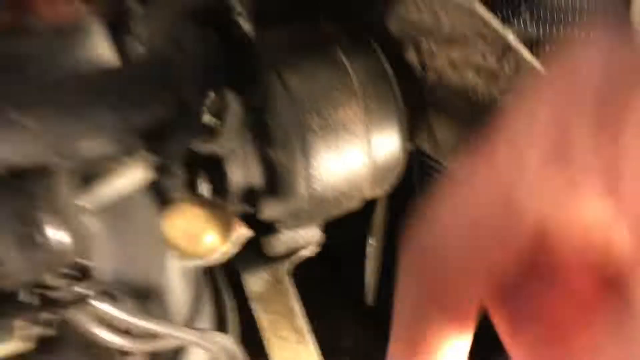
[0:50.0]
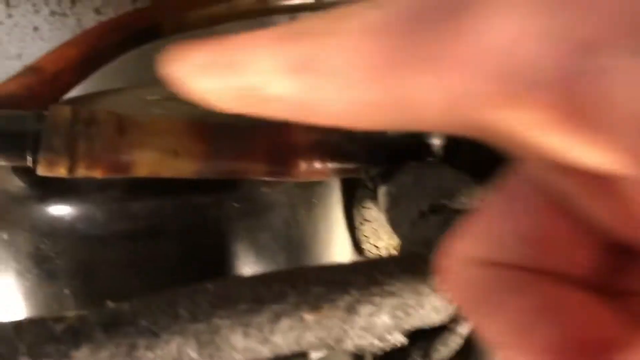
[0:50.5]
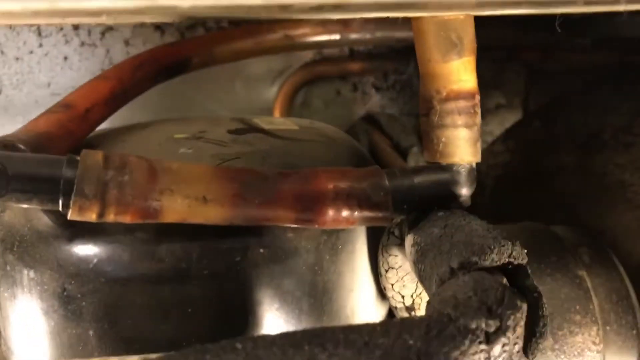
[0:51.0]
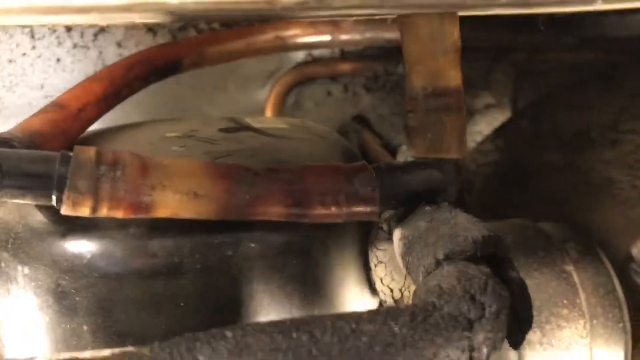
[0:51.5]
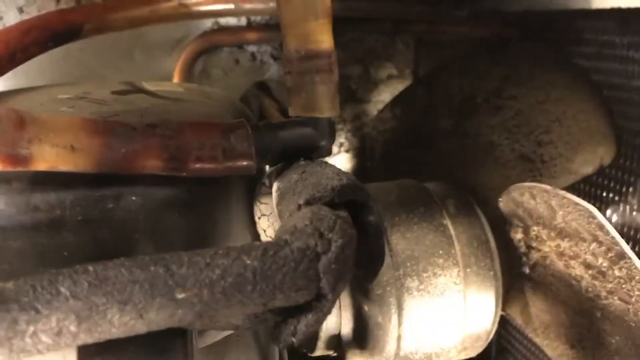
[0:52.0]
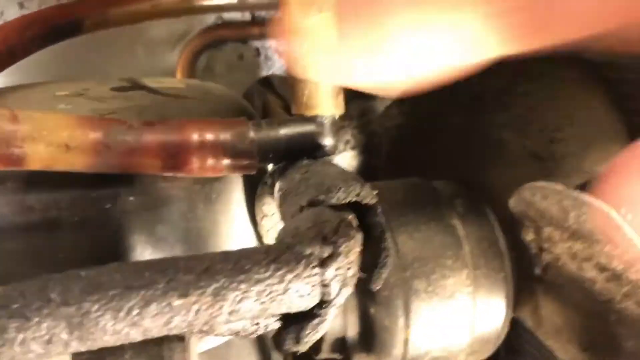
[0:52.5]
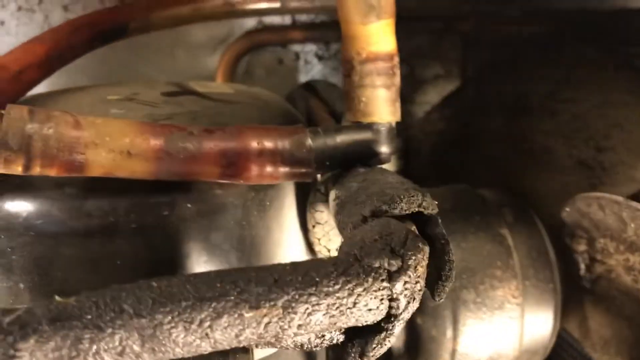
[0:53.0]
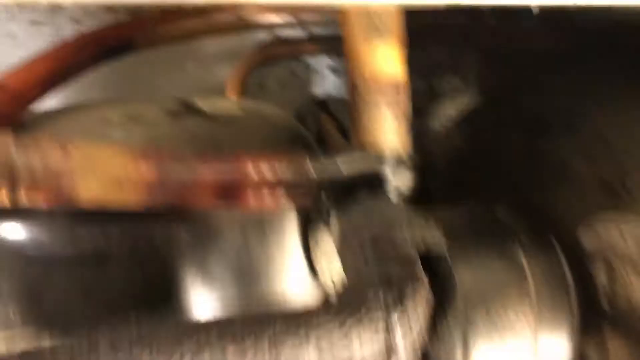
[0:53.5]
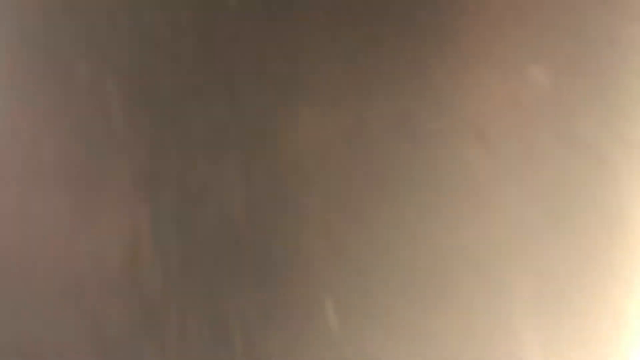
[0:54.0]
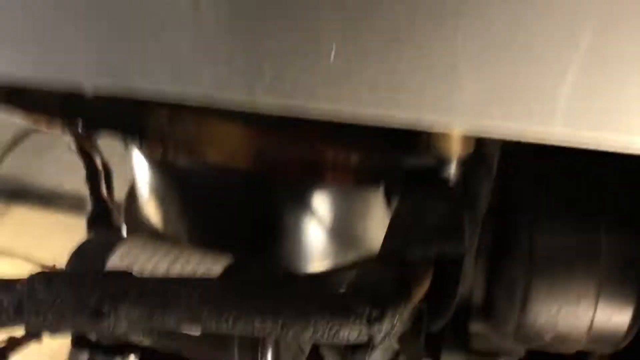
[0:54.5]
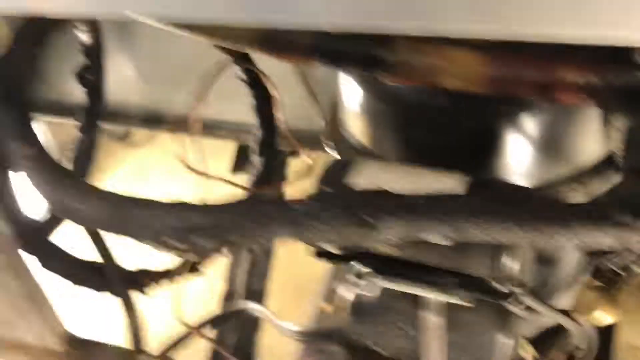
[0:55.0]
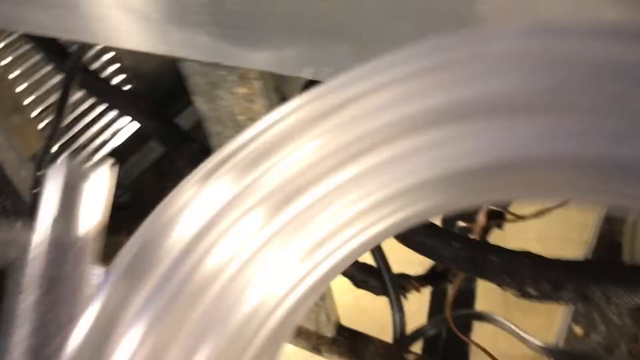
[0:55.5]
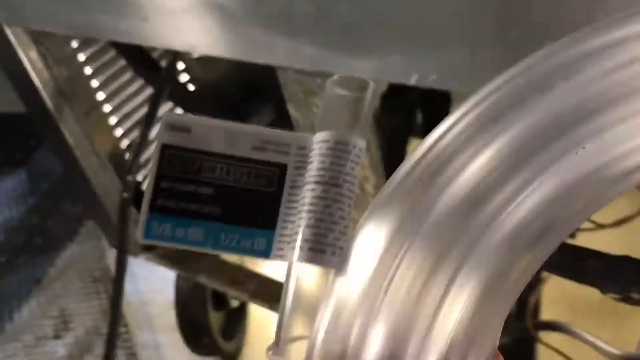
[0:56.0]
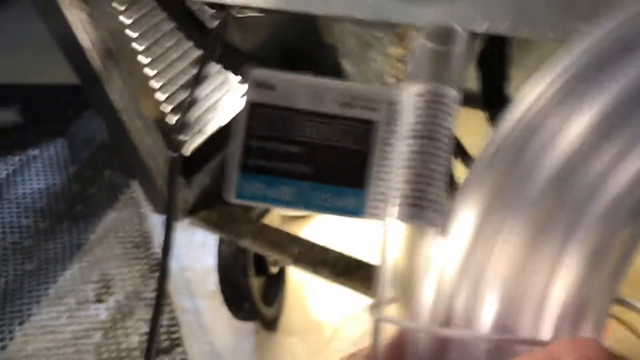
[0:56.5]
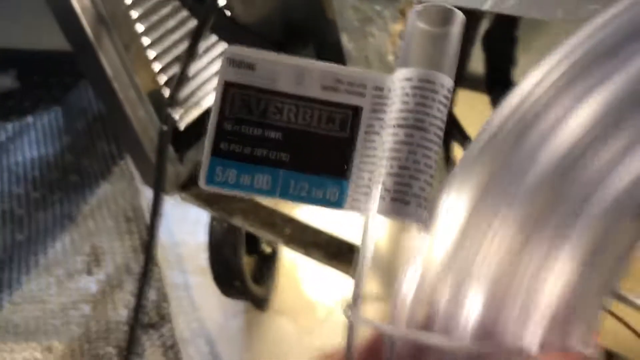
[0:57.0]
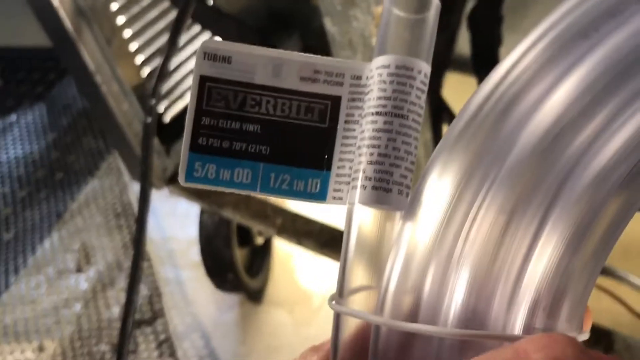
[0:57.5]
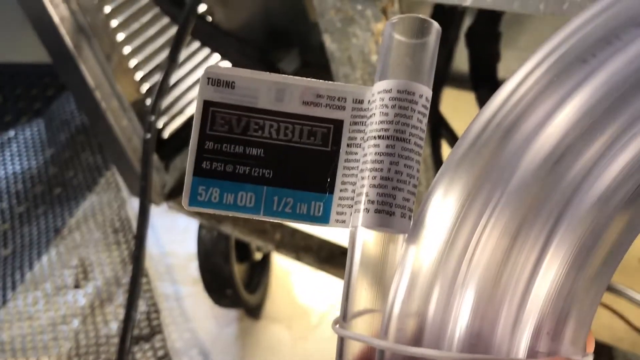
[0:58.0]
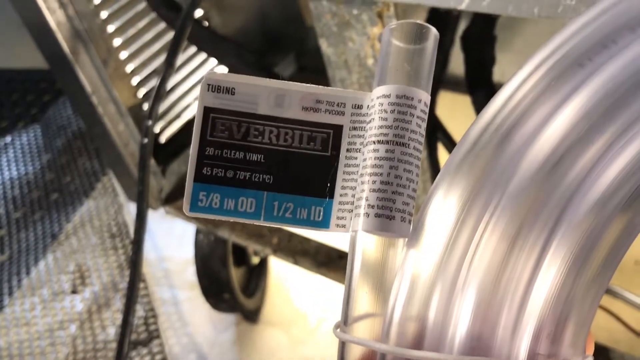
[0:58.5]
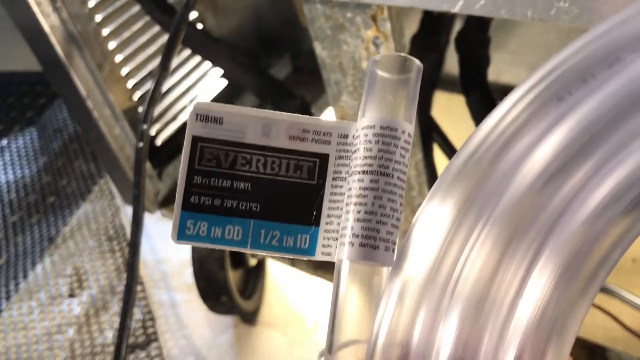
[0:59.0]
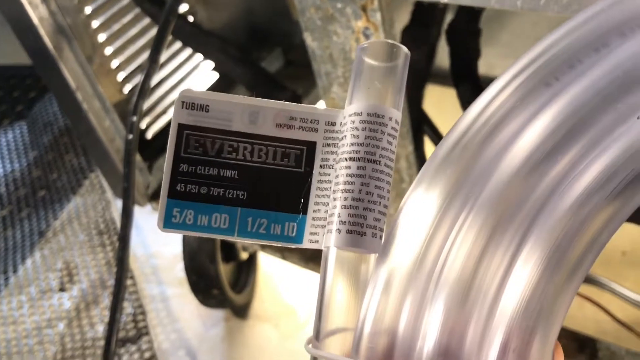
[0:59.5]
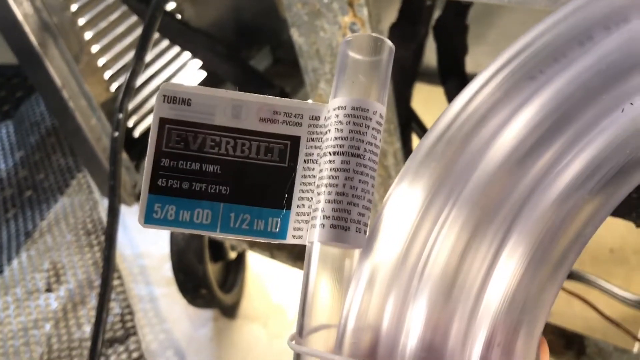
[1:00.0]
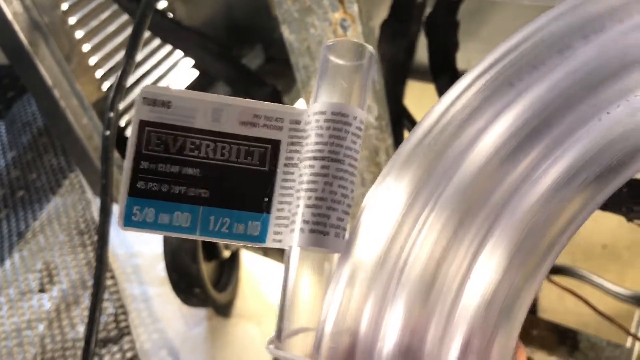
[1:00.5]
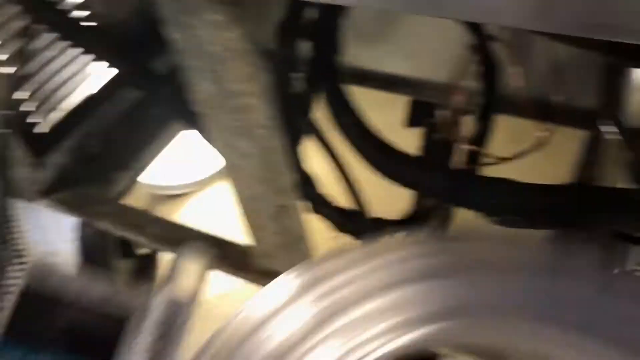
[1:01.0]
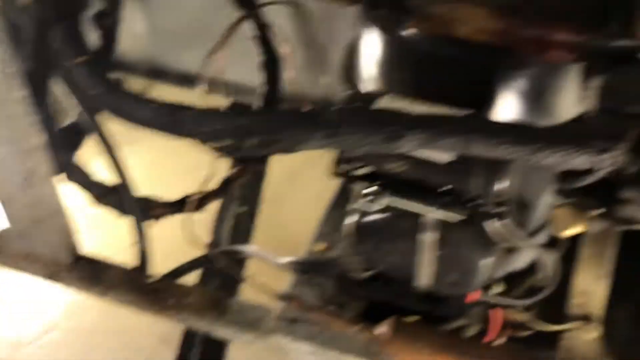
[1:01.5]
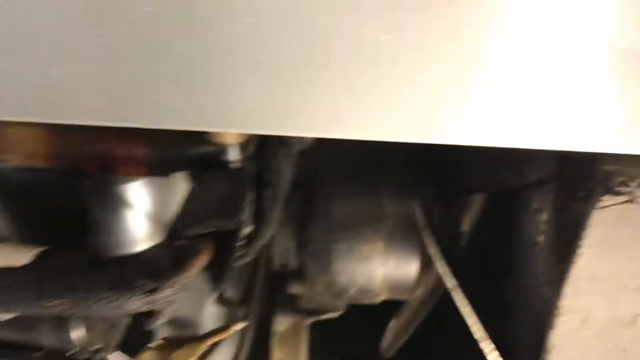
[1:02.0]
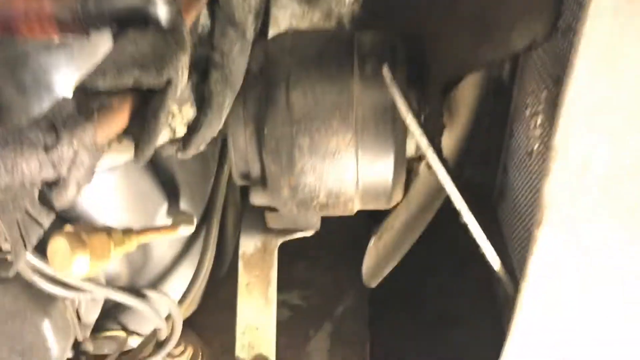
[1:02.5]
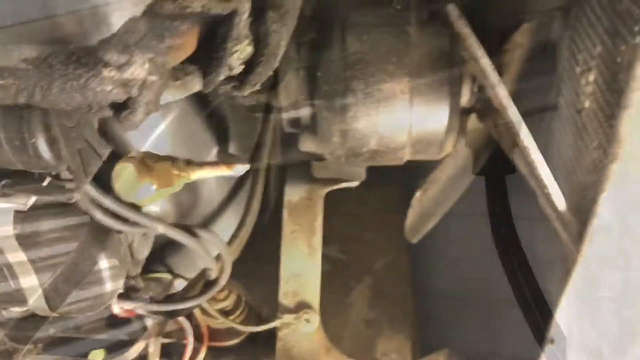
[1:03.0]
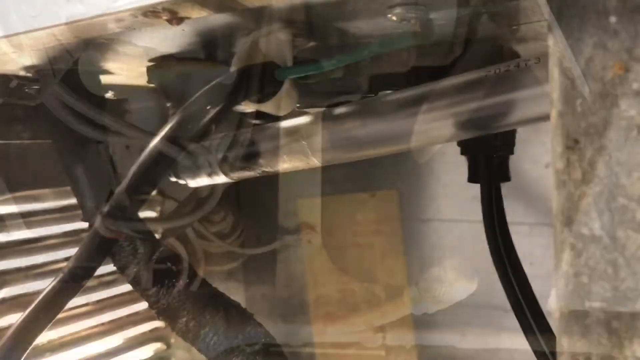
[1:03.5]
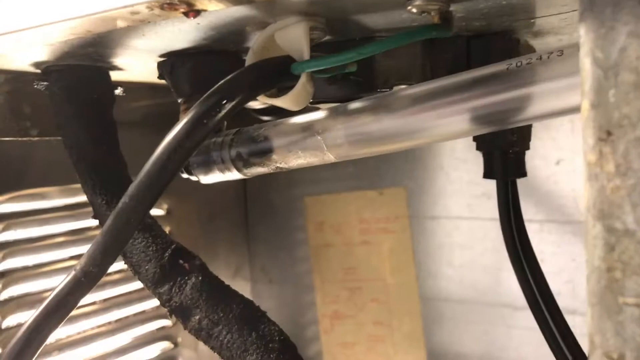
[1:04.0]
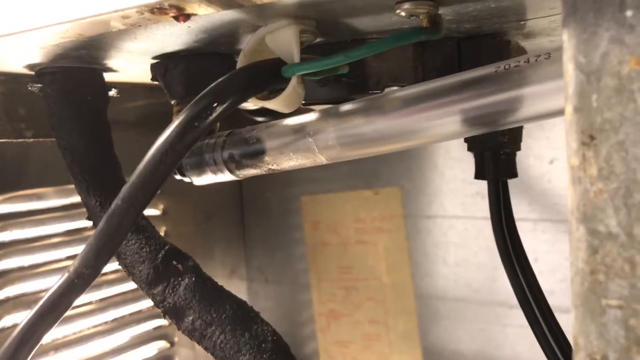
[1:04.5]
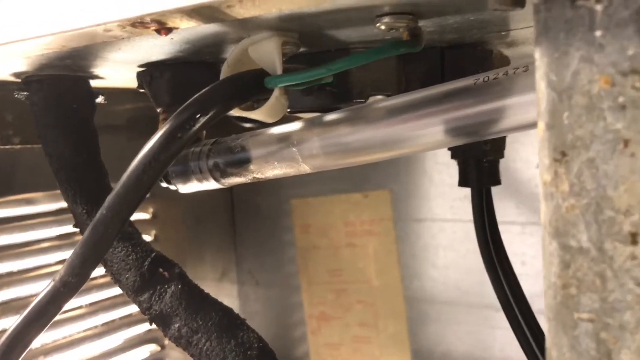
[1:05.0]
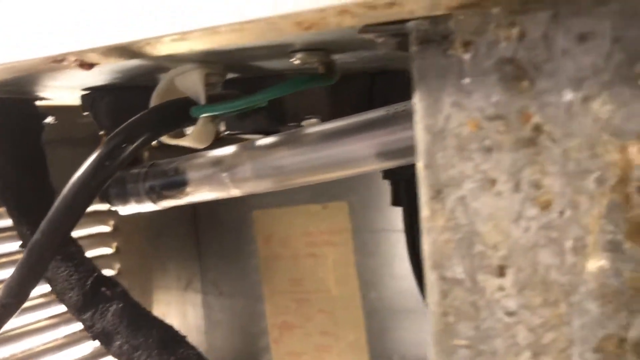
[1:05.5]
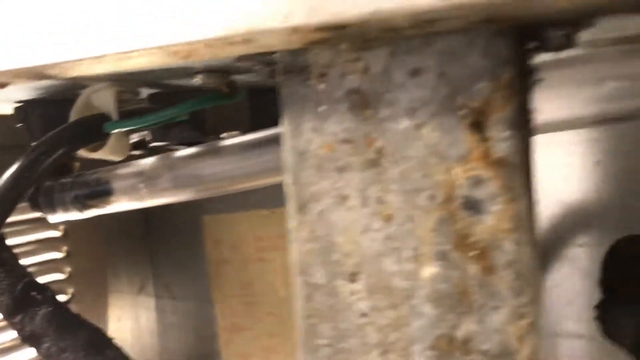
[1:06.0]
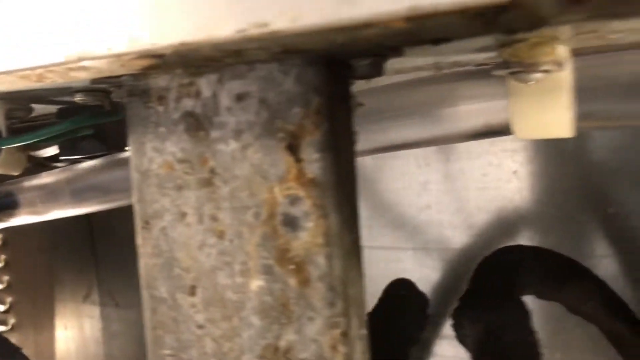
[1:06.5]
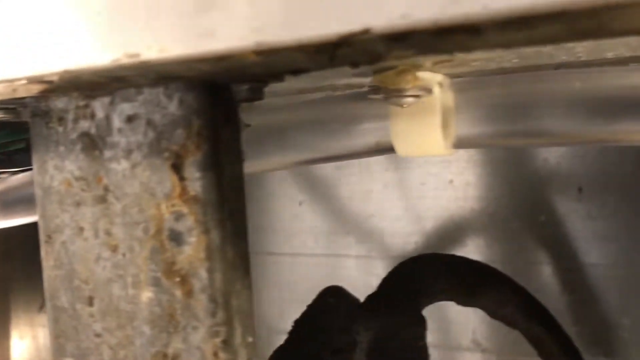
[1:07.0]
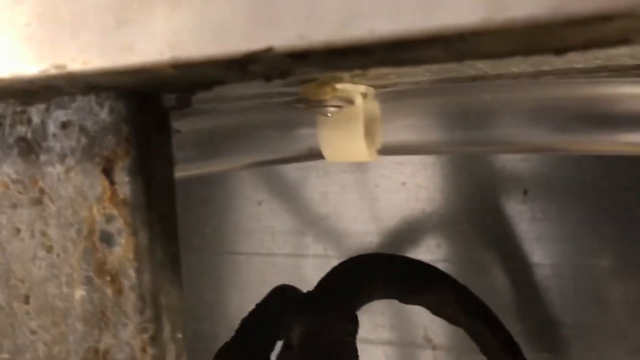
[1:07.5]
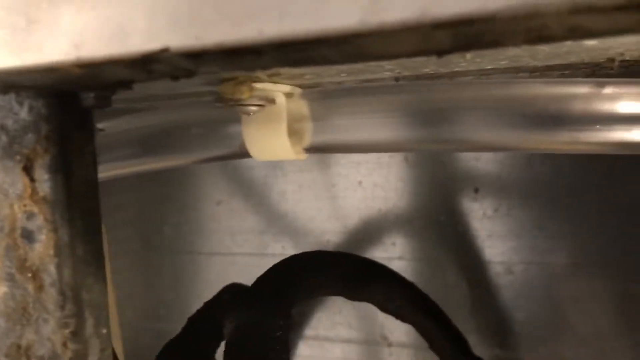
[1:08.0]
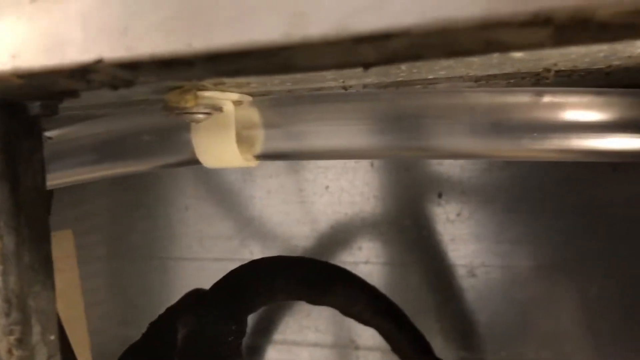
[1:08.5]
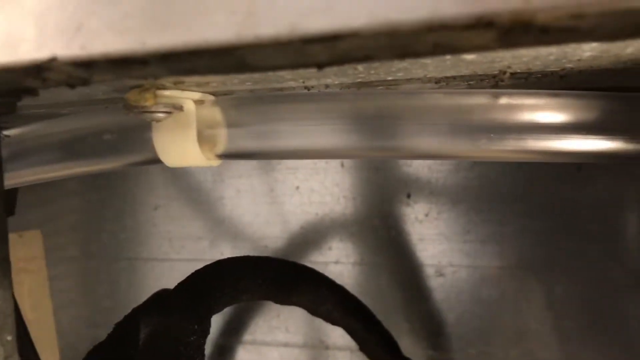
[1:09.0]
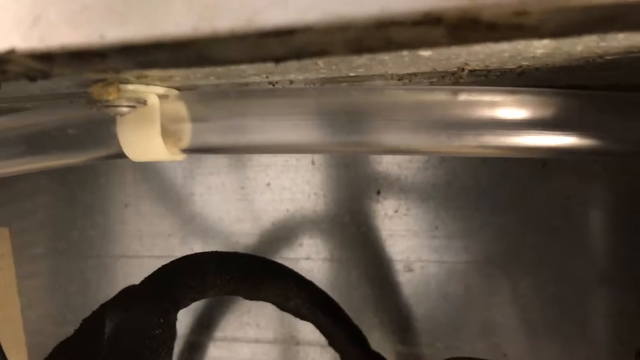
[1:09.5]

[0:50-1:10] The man brings the camera back up to the pipe at the top near the black cylinder, points his finger toward the black cylinder, and shows a little more to the right of it. The camera moves very fast upward, showing the metal wall, before coming back down. He pulls up what looks to be a brand new tube with a tag on it; it is a transparent clear tube. He puts it down out of frame and brings the camera back down to where the fan was near the pipe. The scene fades to the left side of the contraption with the green wiry tube, where he has replaced the old green tube that ran across with the new transparent clear tube, putting it in place within the contraption.